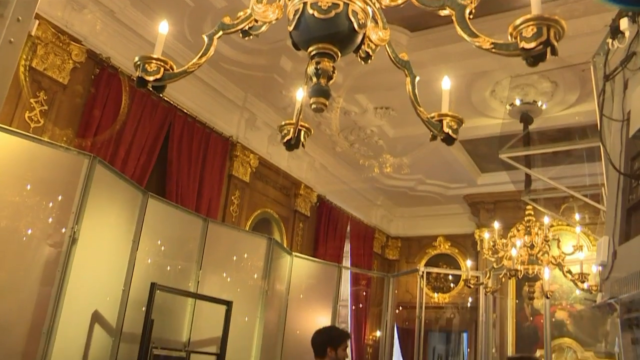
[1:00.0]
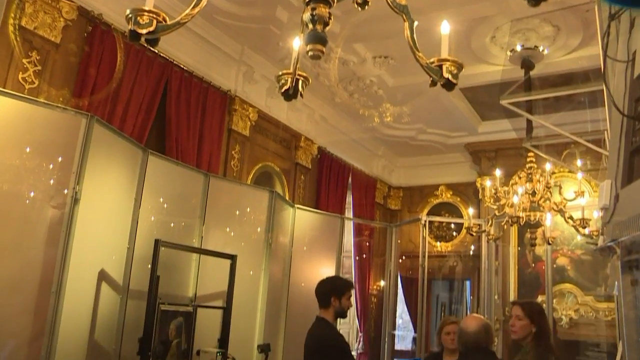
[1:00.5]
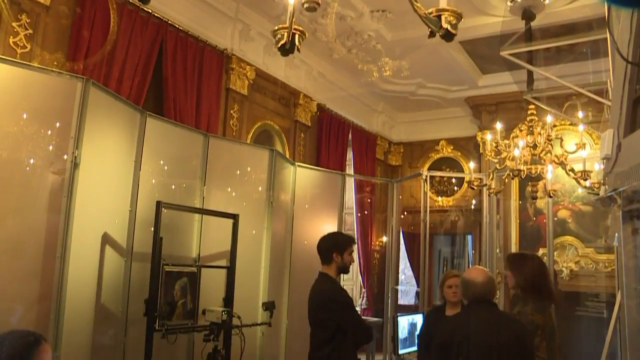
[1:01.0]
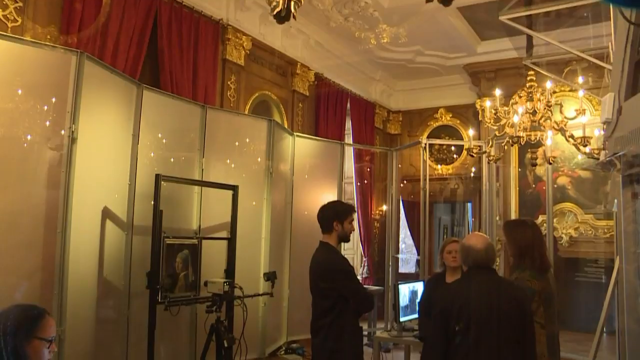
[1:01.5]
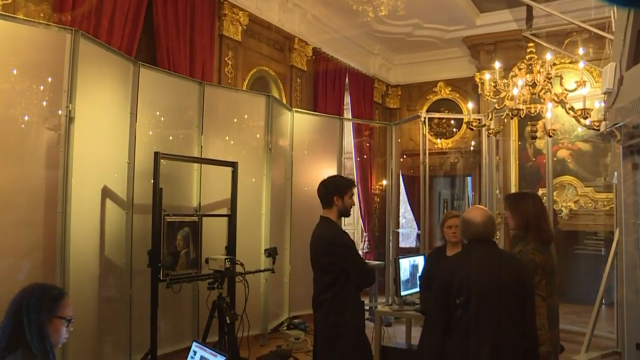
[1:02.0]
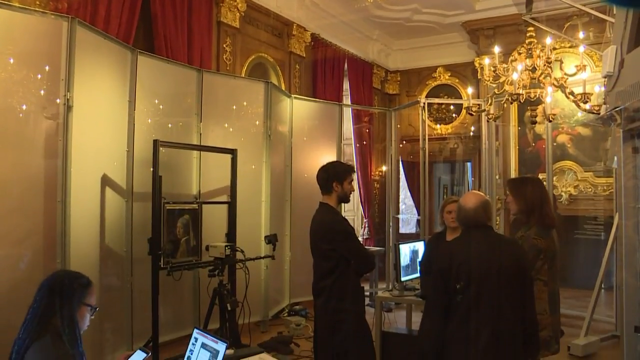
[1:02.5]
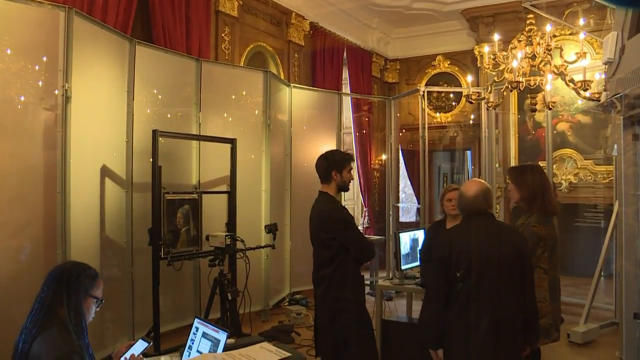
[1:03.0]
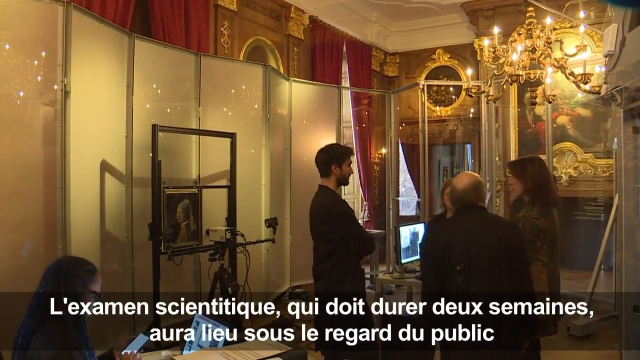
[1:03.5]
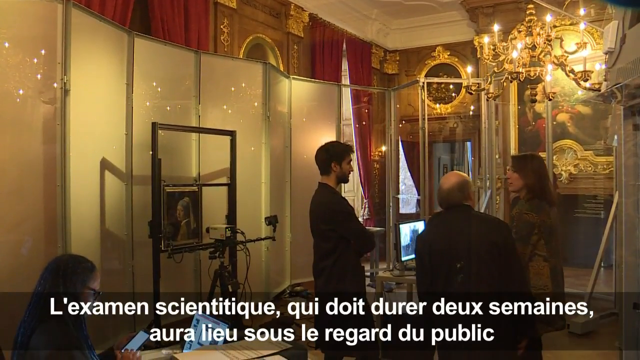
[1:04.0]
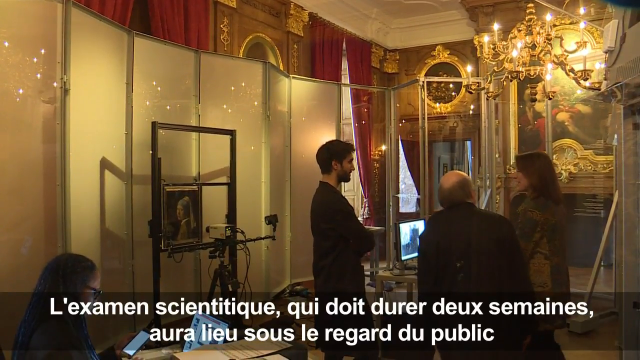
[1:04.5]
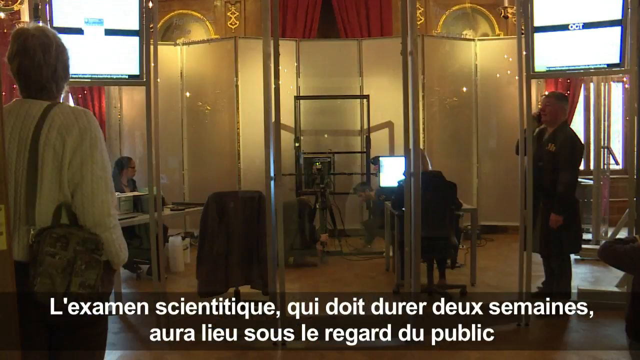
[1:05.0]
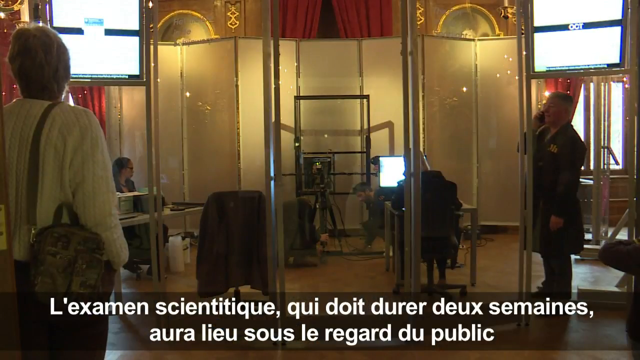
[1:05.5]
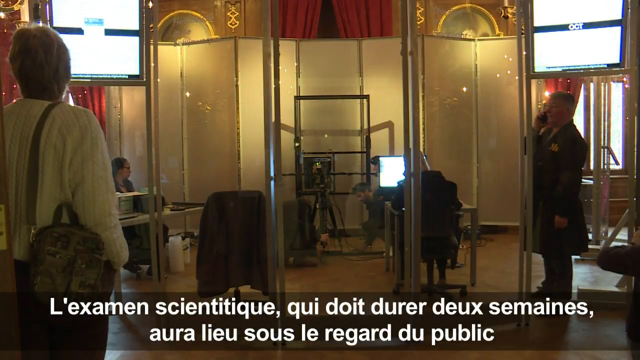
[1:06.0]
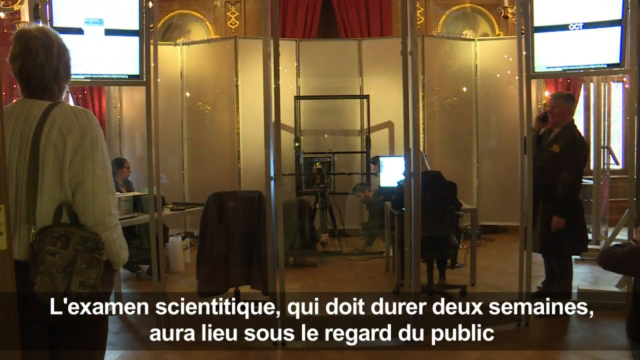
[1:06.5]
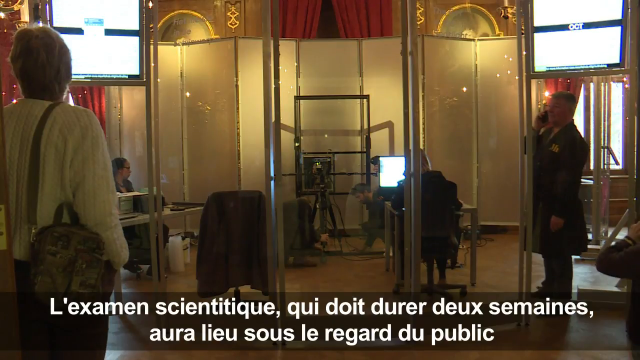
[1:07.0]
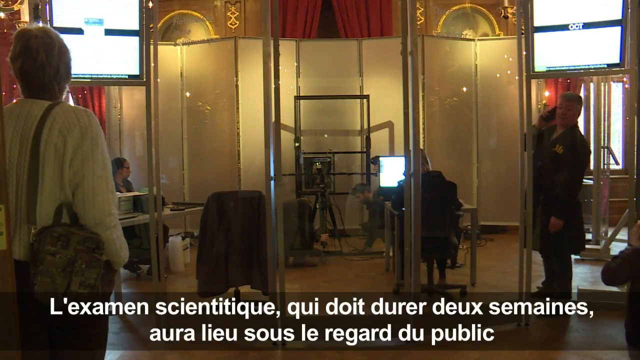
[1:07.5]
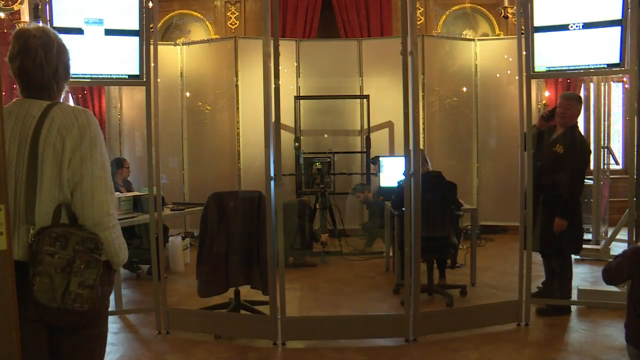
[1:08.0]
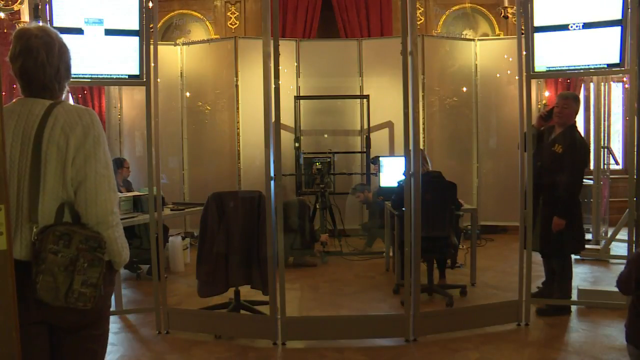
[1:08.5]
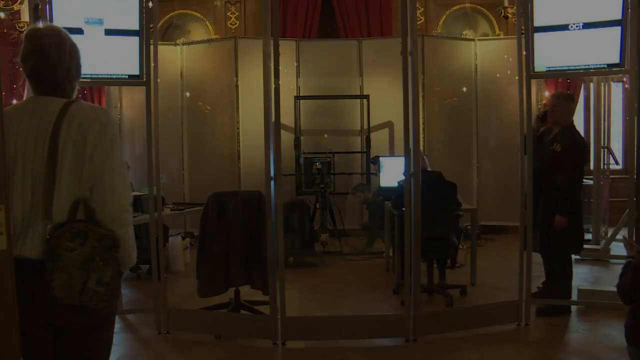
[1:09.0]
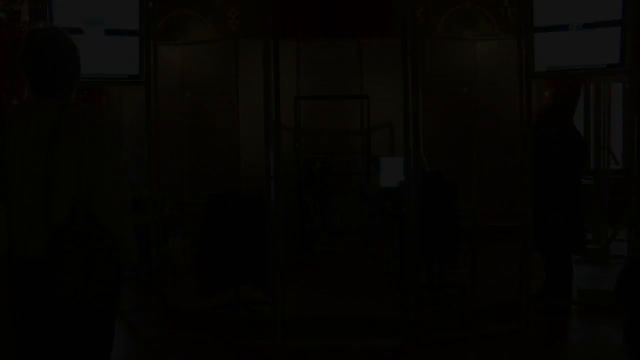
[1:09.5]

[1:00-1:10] The camera pans down, revealing that this is the same, very large room with the black and gold chandelier. As it pans down, the painting on the wall is visible with the camera that was being used and the glass outlined in a black frame. Four people are now talking: the lady who was interviewed and the ones who were working on taking the picture. The view then backs up even further, showing a gentleman on a phone, a lady on the right with a purse, and people to the left. The picture on the computer screen appears to be on again and lit up, standing out from the darkness of the room. There are people at tables in the area, probably monitoring everything, a partition that kind of blocks the painting from the rest of the room, and curtains that can come down. Finally the video goes dark and ends.